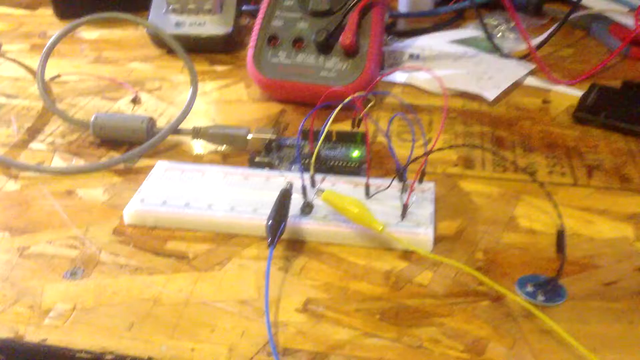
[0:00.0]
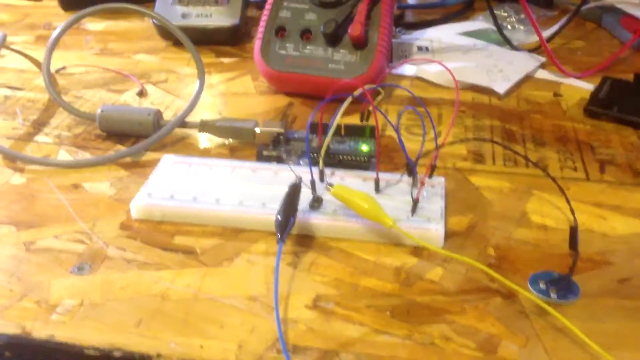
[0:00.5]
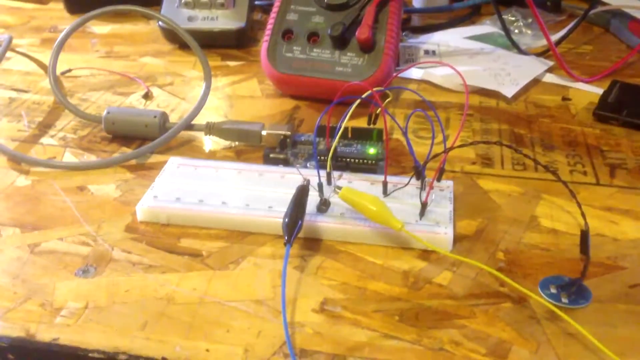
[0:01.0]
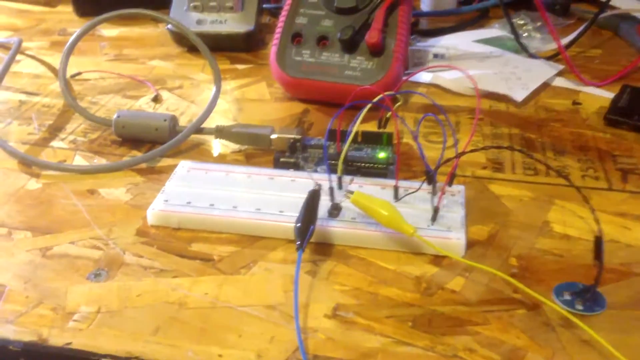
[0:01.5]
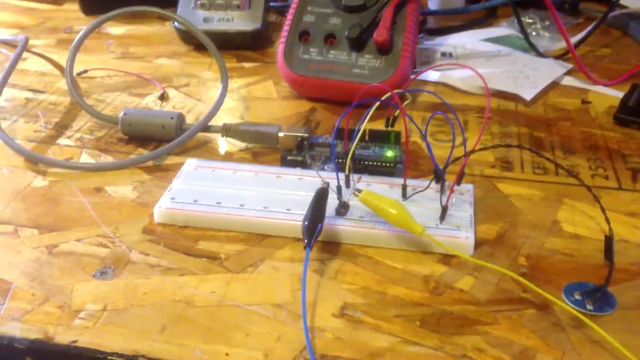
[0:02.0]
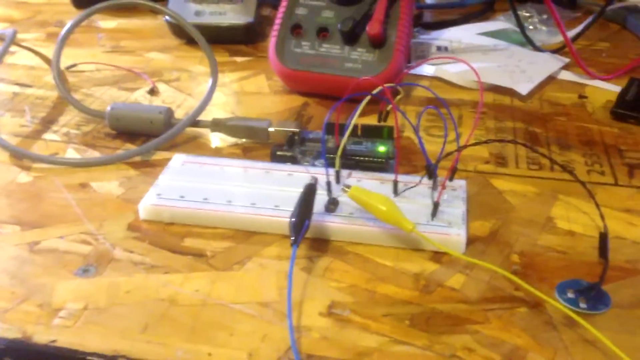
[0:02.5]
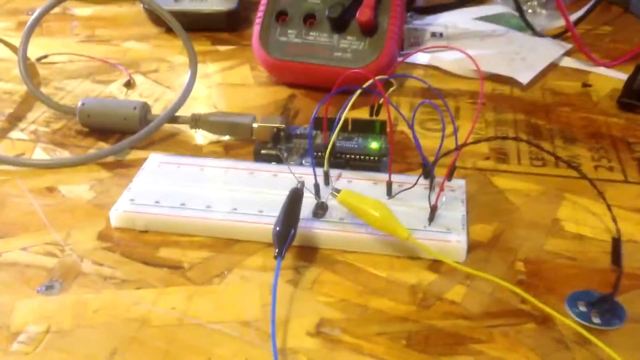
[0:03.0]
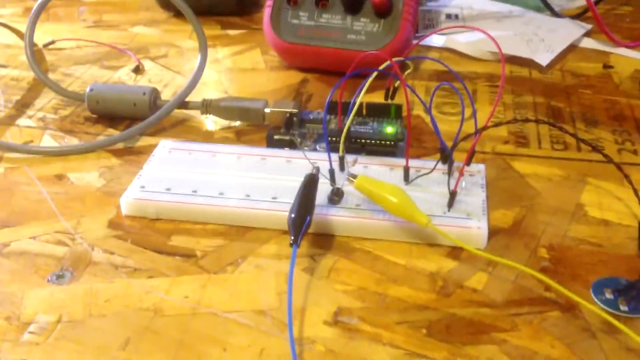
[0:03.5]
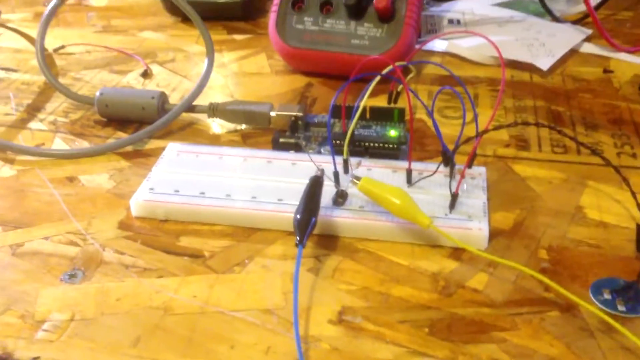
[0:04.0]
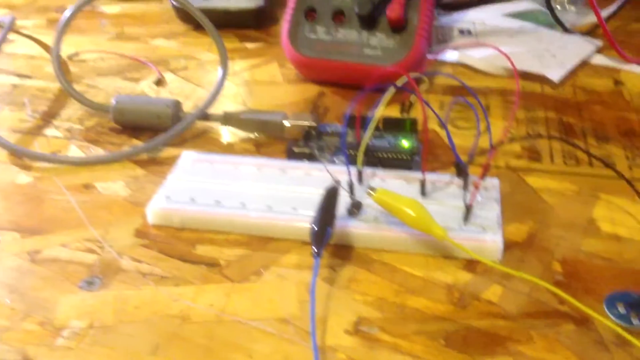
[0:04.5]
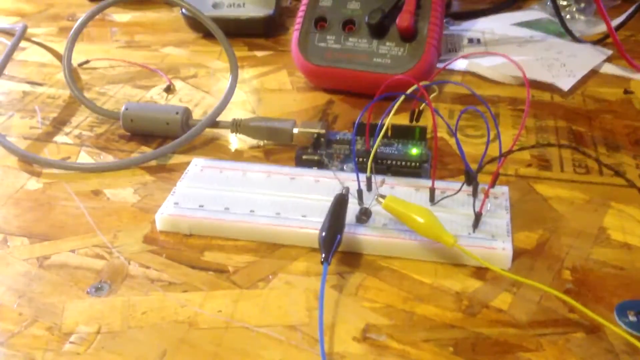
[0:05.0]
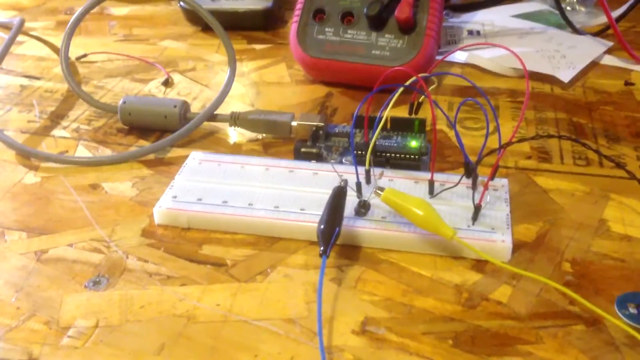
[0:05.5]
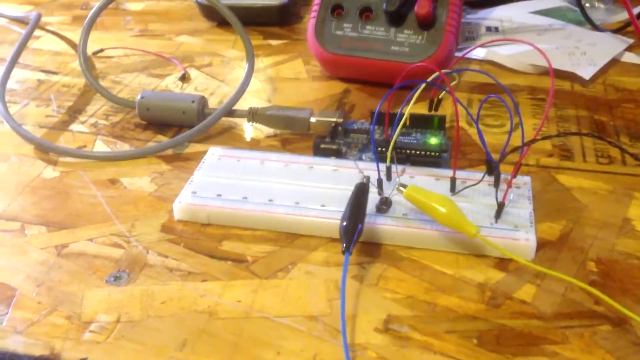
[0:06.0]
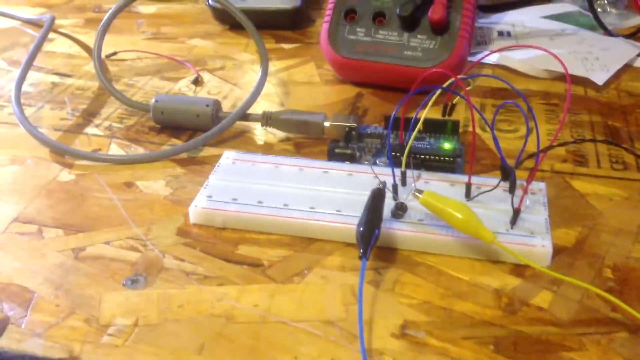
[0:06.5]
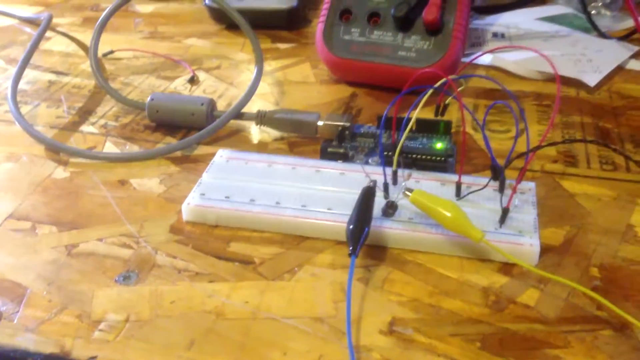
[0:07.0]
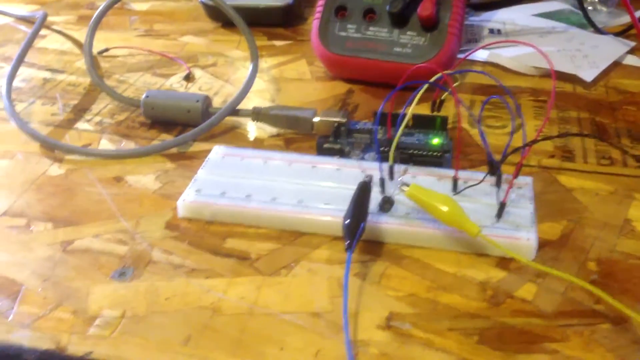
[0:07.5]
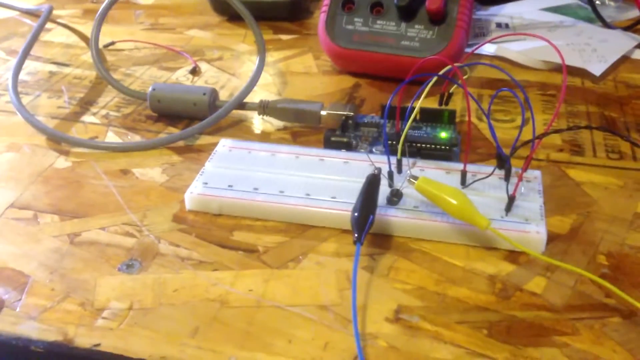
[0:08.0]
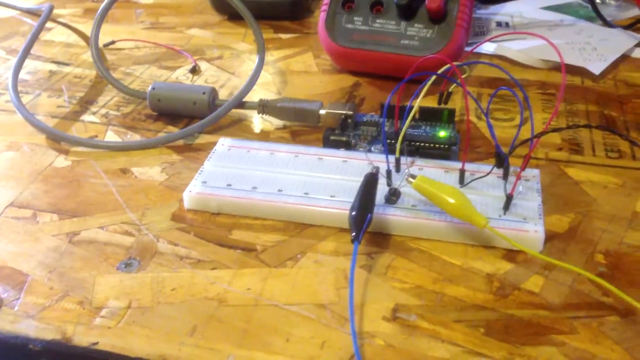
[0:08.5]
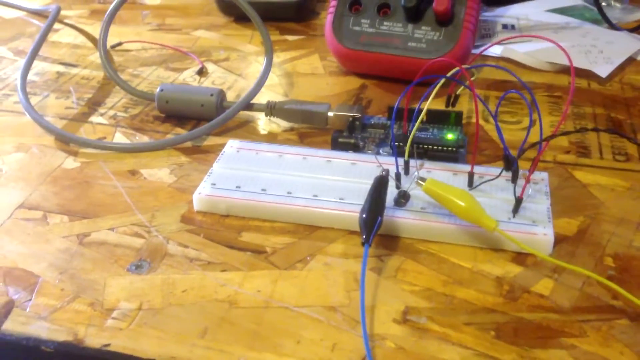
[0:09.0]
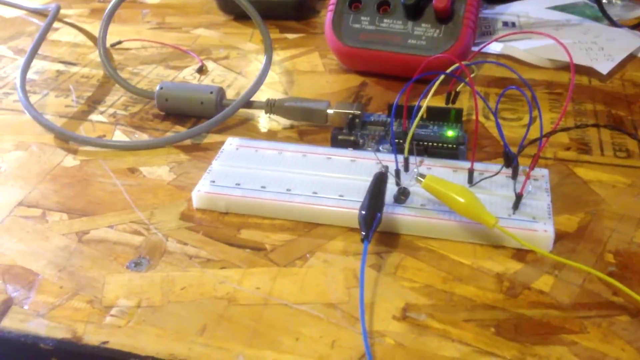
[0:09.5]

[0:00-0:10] Several cables are visible, in yellow, blue and red, along with a charger cord that is not plugged into the multimeter tester on the table. A small device on the table shows a green light. Other items around the table are not very visible, but there appears to be something like papers on the brown table.